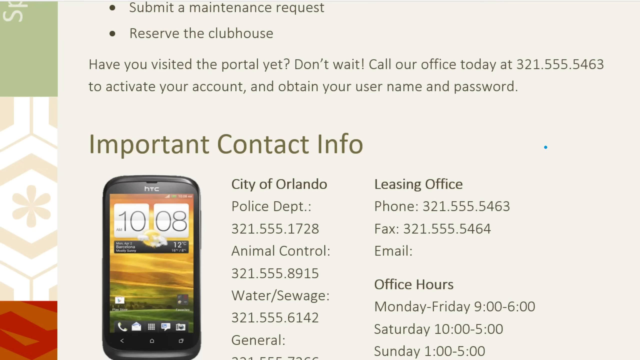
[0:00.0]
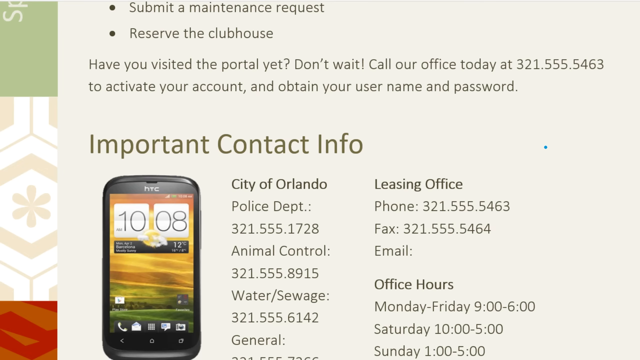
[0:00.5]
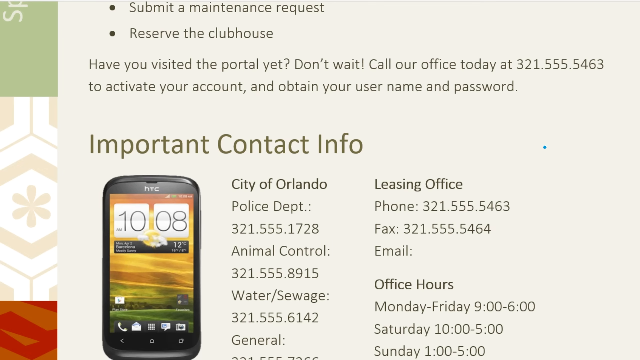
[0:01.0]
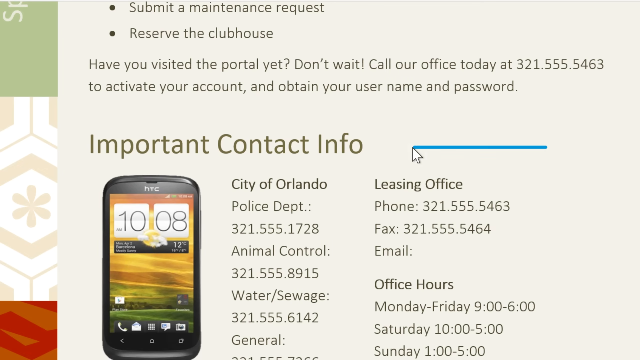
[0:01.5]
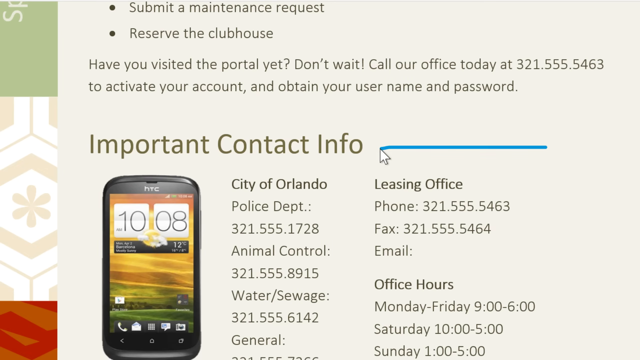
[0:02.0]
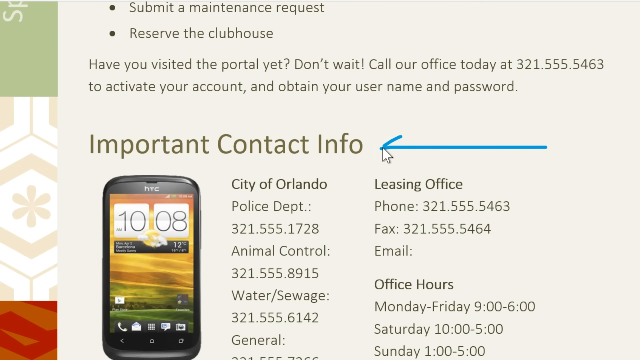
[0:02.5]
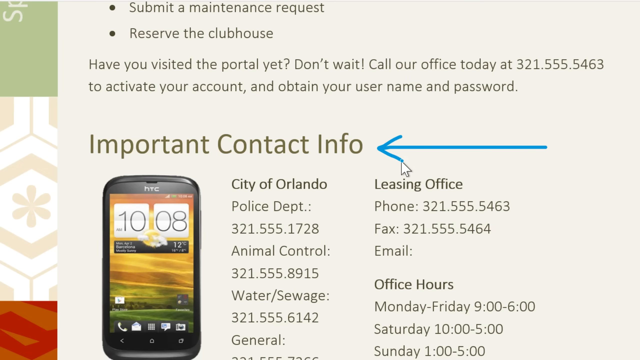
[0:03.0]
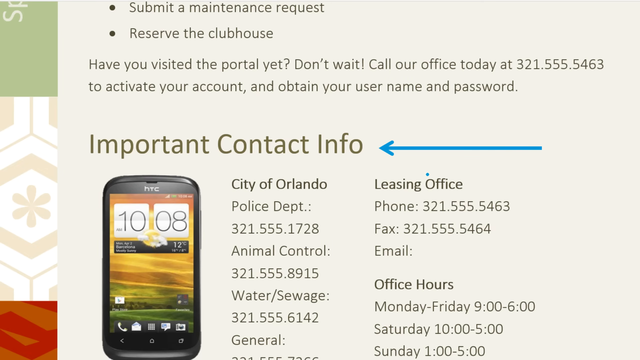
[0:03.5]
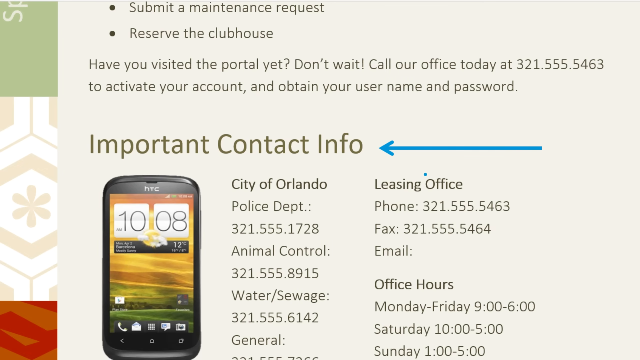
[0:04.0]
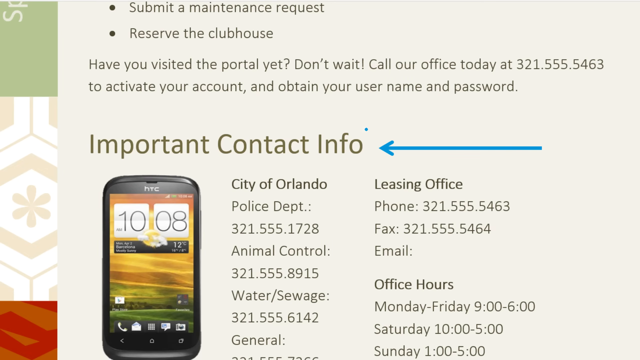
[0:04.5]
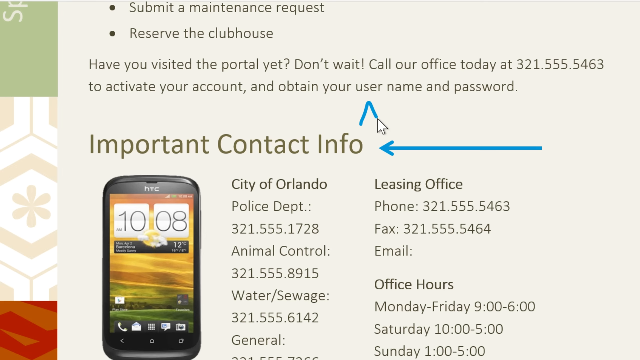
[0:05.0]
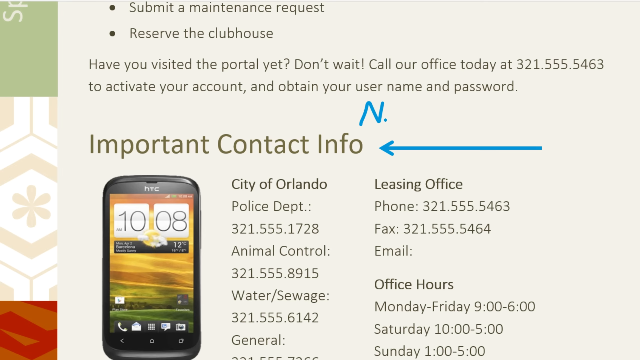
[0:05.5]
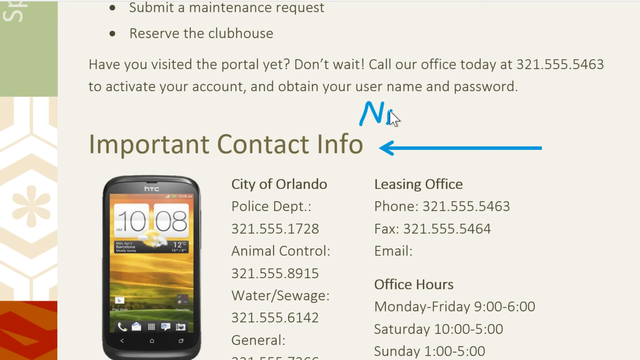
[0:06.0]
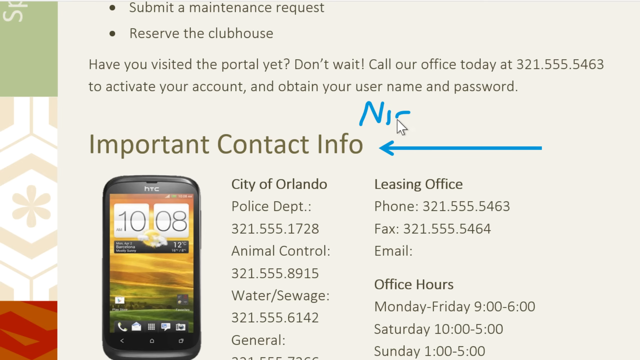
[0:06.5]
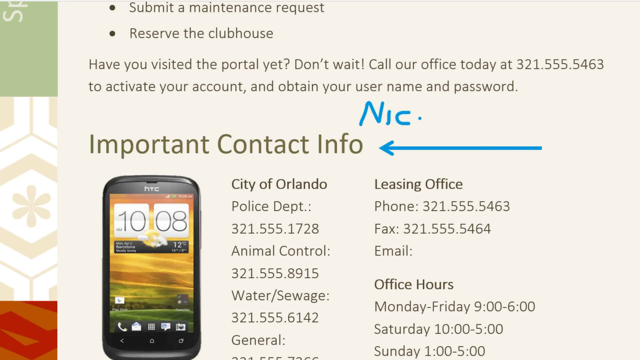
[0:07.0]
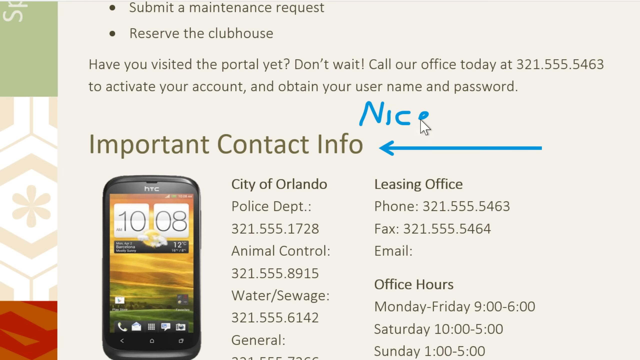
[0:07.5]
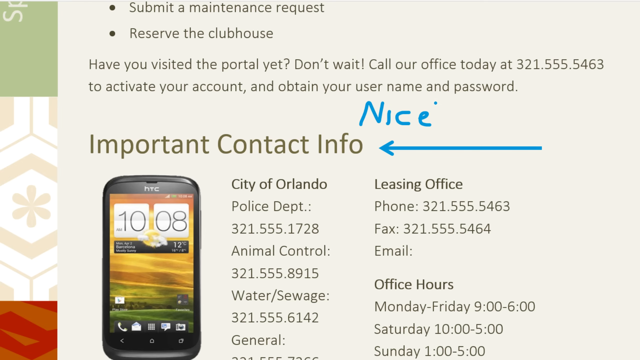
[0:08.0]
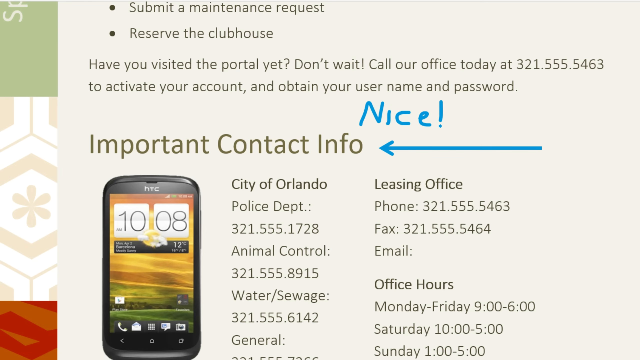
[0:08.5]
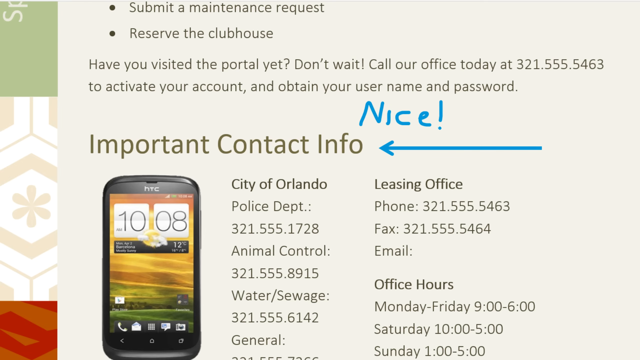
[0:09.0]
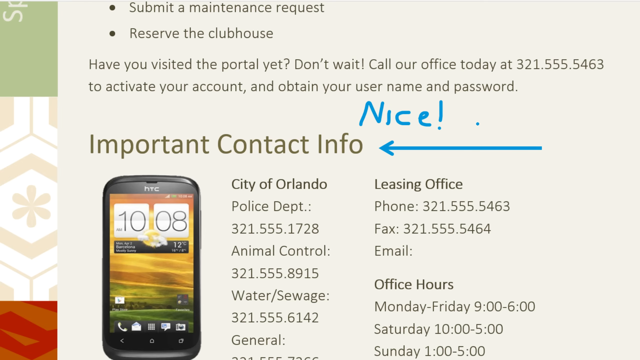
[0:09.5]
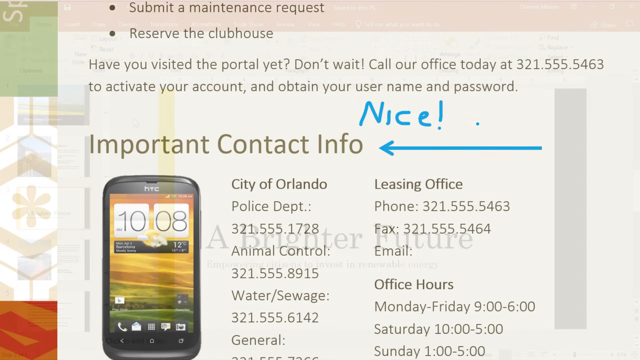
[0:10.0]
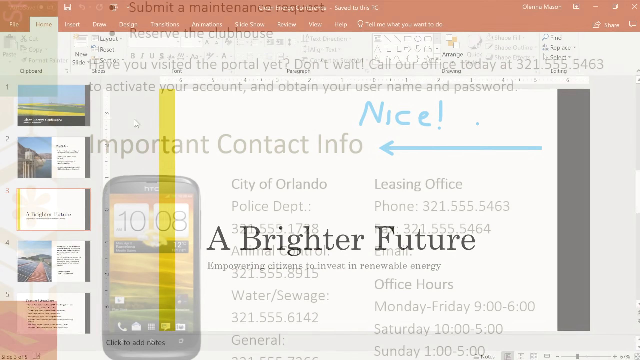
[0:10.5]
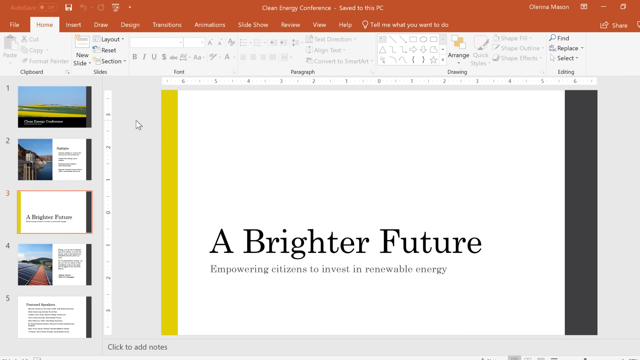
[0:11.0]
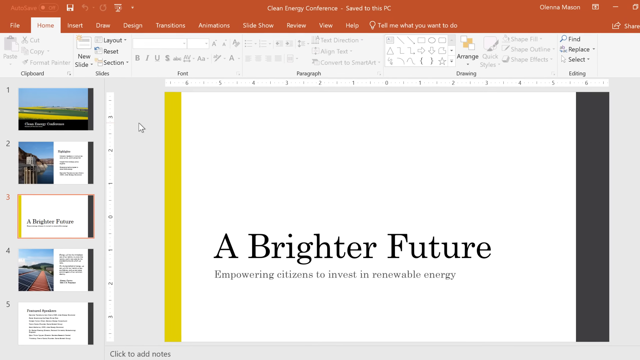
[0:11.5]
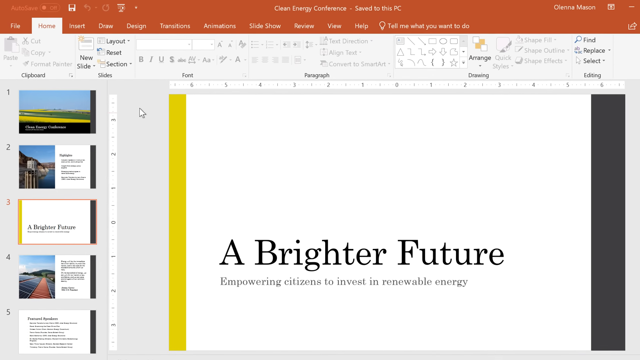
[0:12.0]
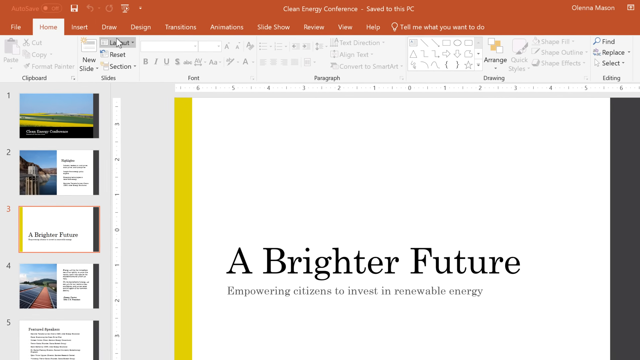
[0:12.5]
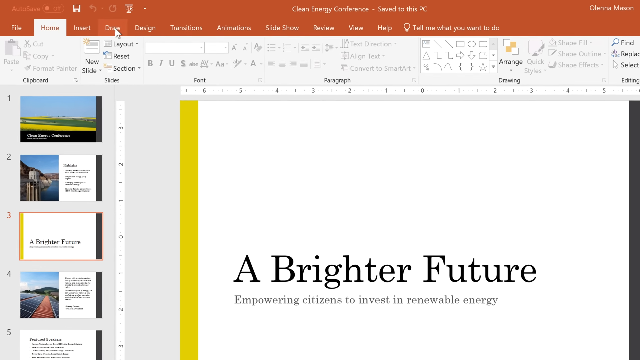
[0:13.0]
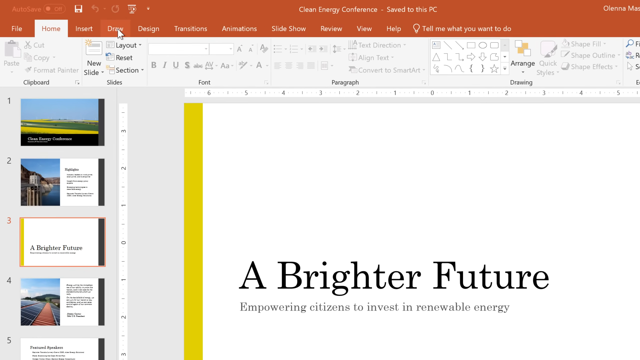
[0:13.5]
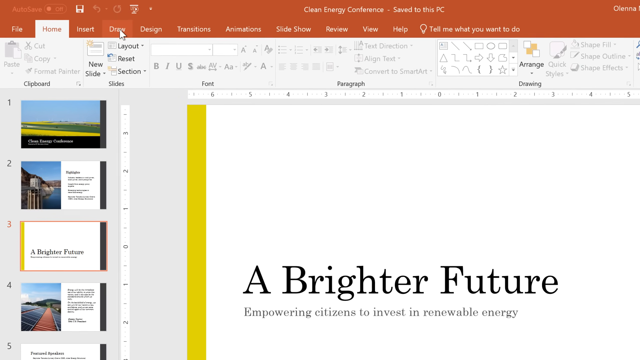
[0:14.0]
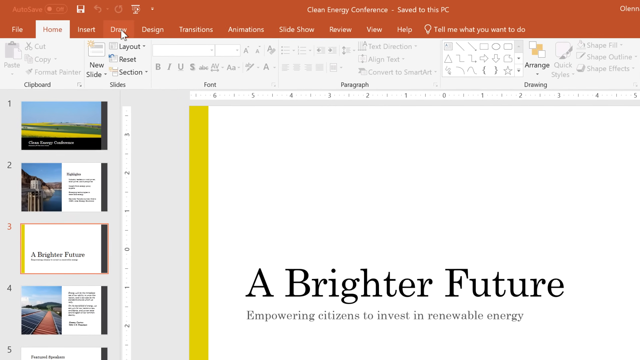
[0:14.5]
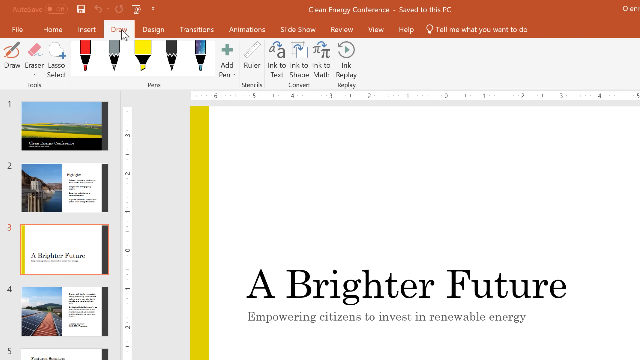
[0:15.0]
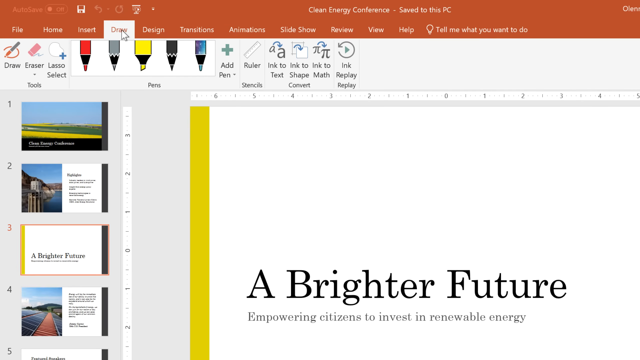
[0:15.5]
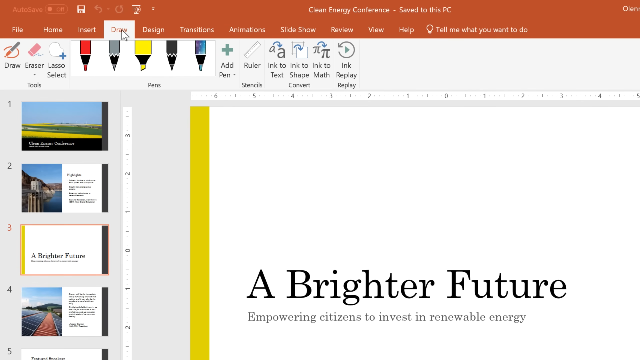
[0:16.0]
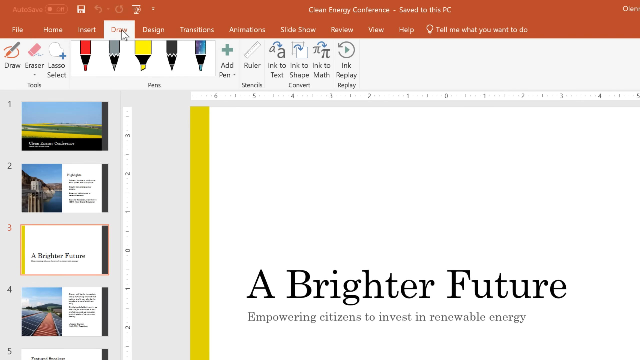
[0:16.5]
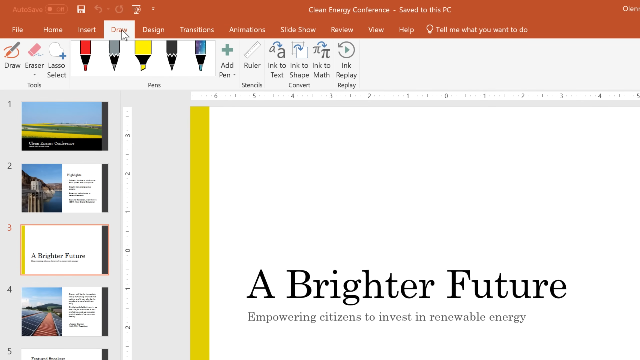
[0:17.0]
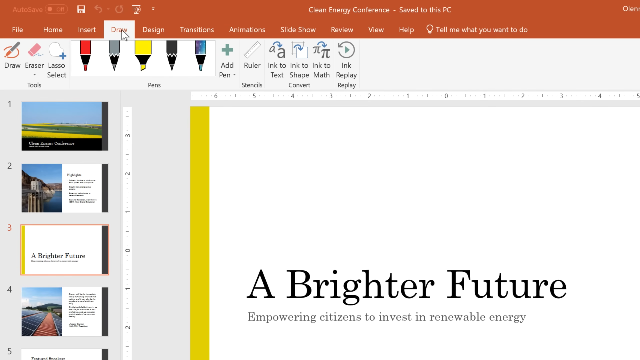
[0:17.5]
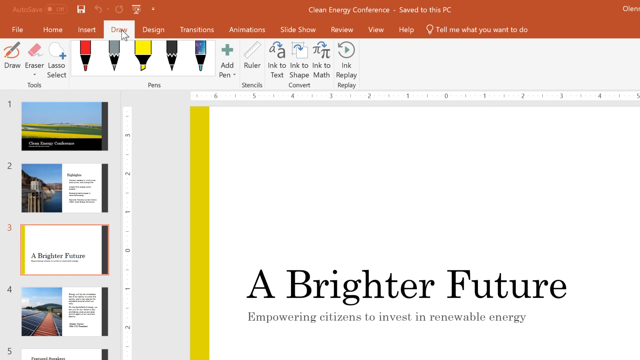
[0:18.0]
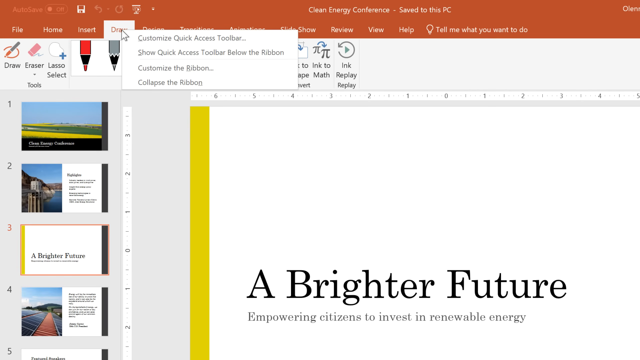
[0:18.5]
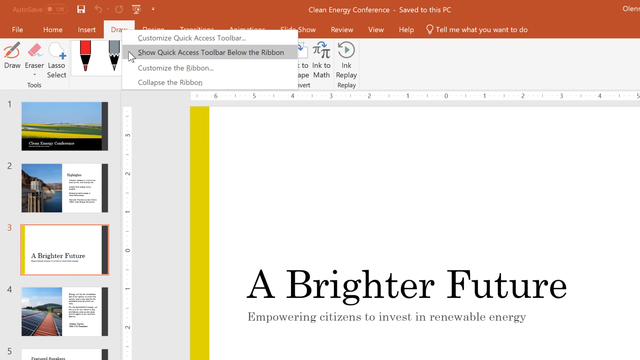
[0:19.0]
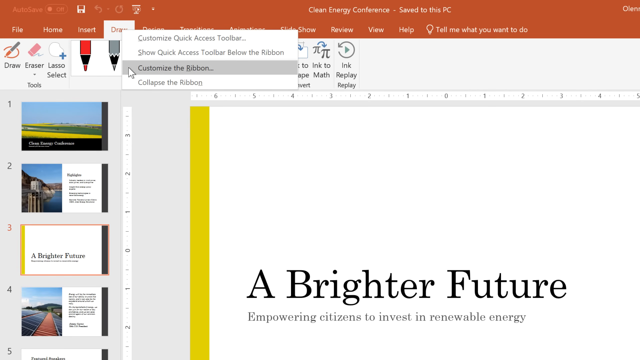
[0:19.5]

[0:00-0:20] The view looks like a screenshot of some sort, almost a computer screen. At the bottom there is a smartphone, and right above it the text reads "important contact info." To the right of that, a blue arrow is being drawn directly to the end of it. Underneath is something like "city of Orlando," along with the leasing office and office hours. Right above the arrow, the word "nice" is being drawn in blue with an exclamation point. The mouse pointer moves slightly. The scene then changes to a PowerPoint screen, where the presentation reads "A Brighter Future." The mouse pointer is up by the Draw tab and clicks on it, which changes some of the options, and a menu is being selected.